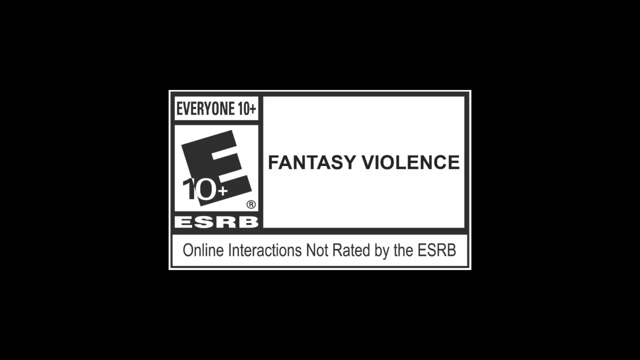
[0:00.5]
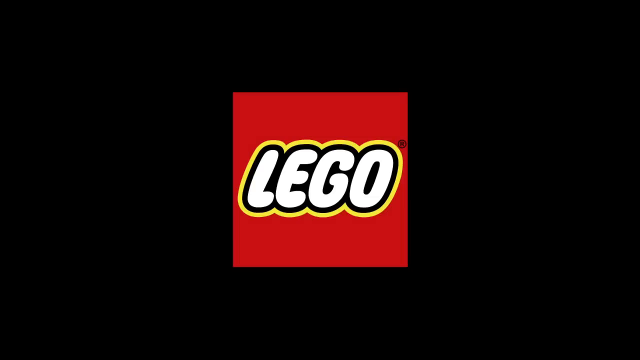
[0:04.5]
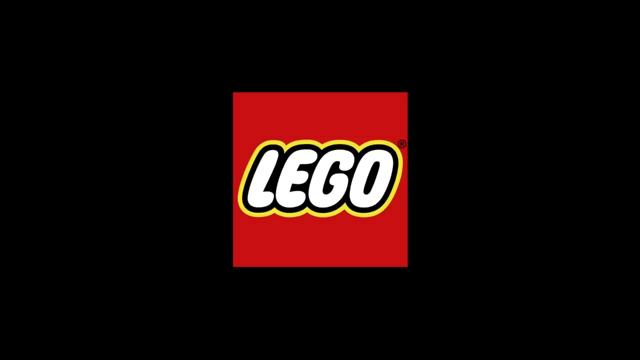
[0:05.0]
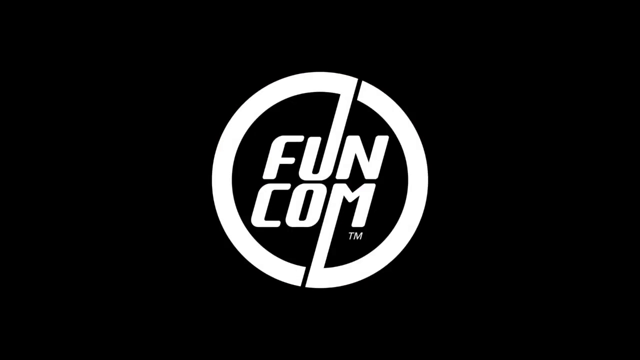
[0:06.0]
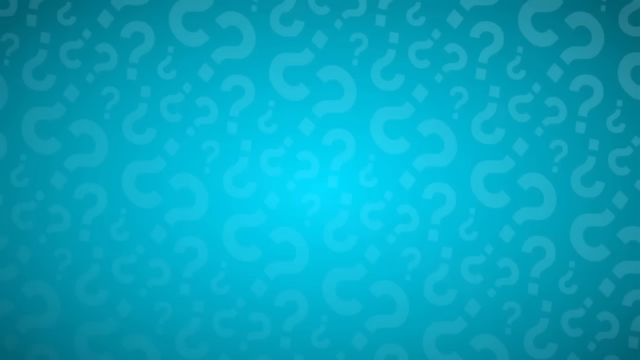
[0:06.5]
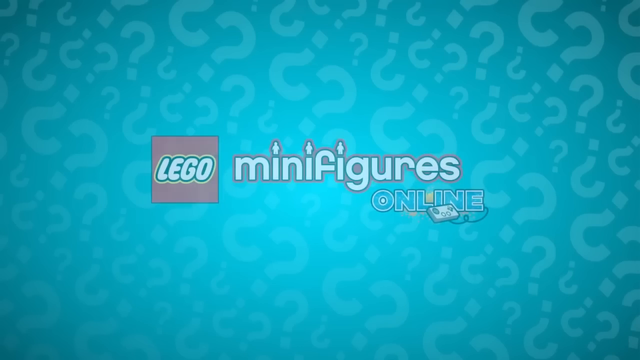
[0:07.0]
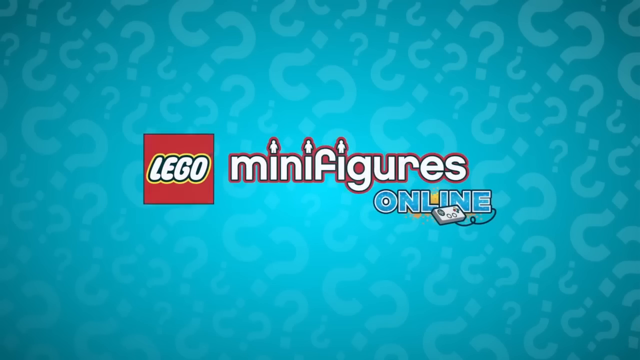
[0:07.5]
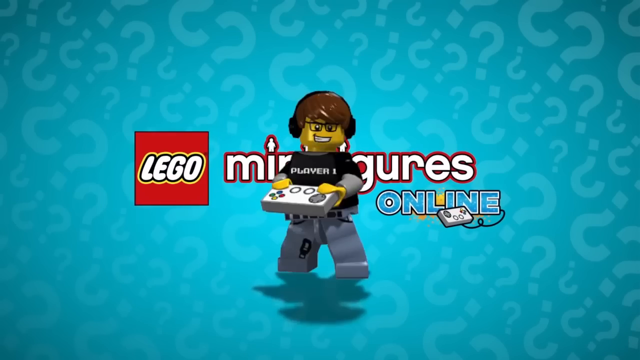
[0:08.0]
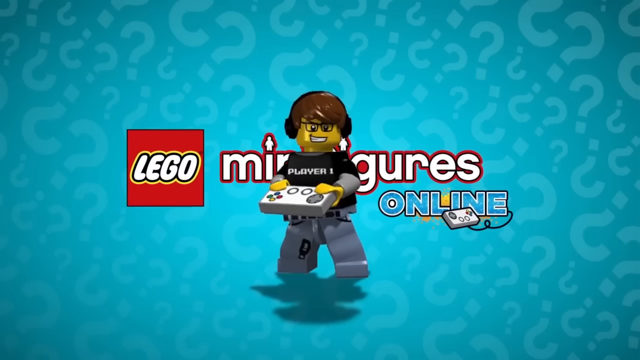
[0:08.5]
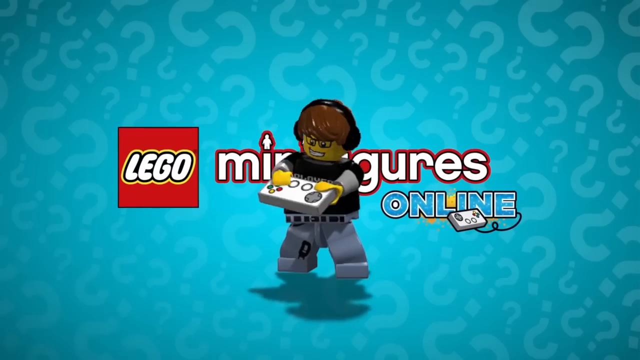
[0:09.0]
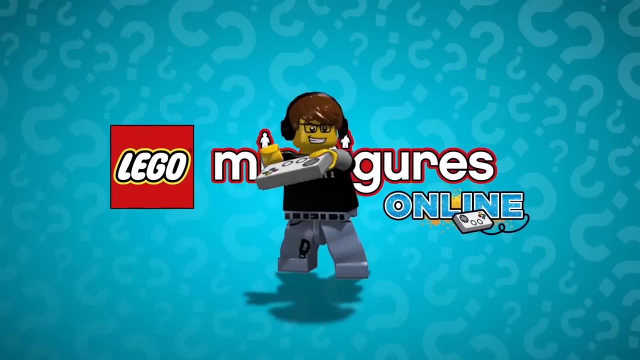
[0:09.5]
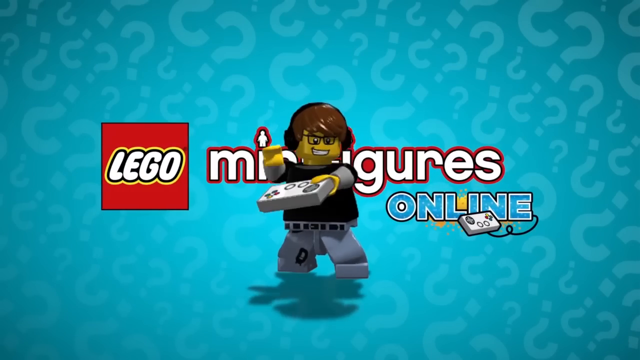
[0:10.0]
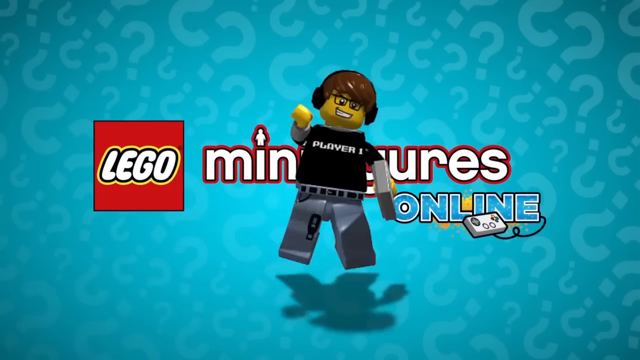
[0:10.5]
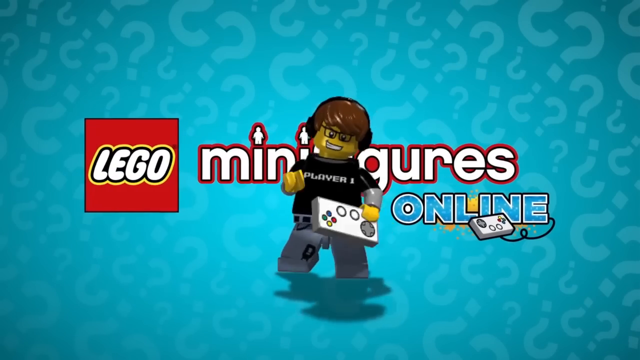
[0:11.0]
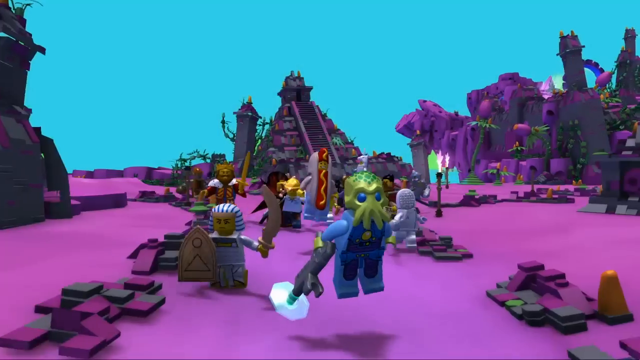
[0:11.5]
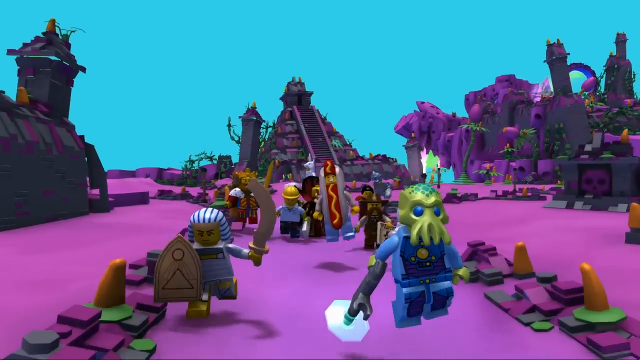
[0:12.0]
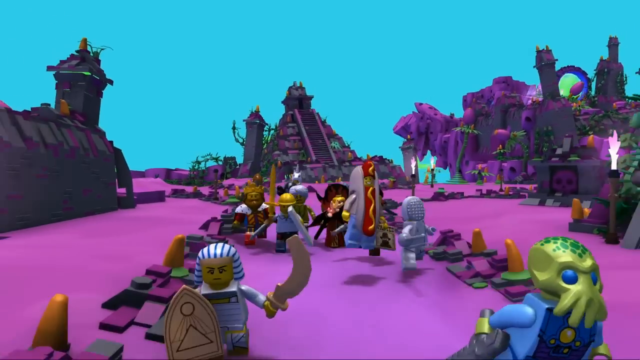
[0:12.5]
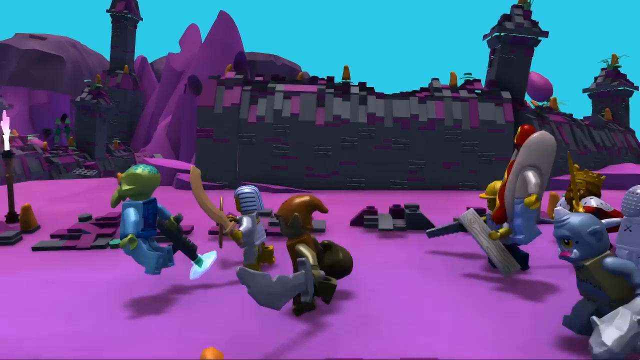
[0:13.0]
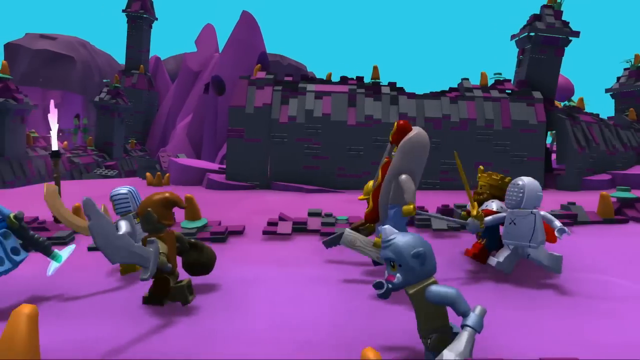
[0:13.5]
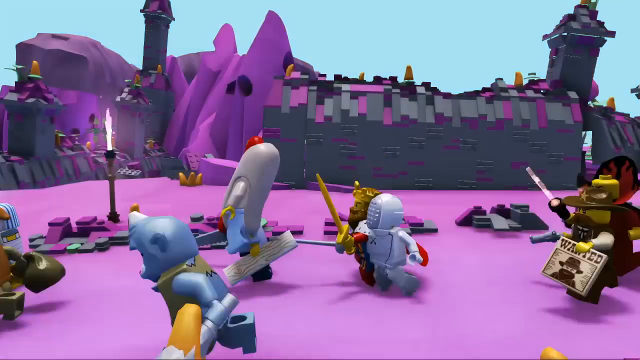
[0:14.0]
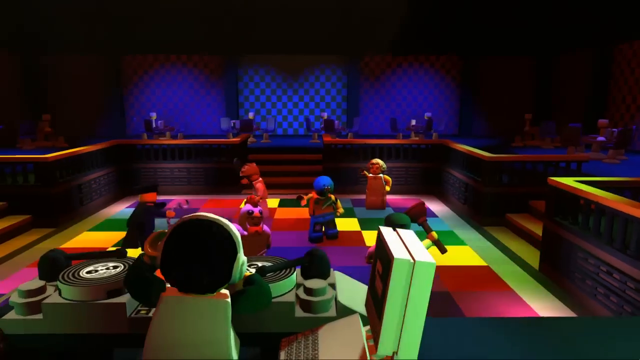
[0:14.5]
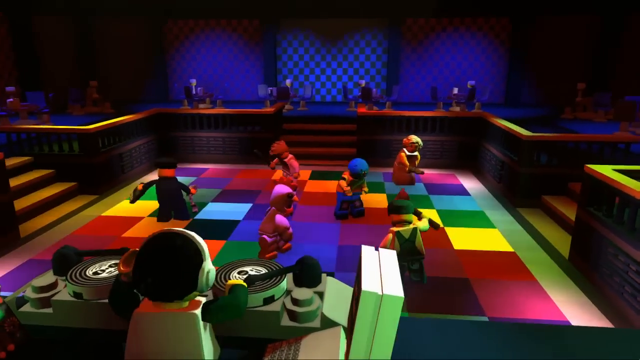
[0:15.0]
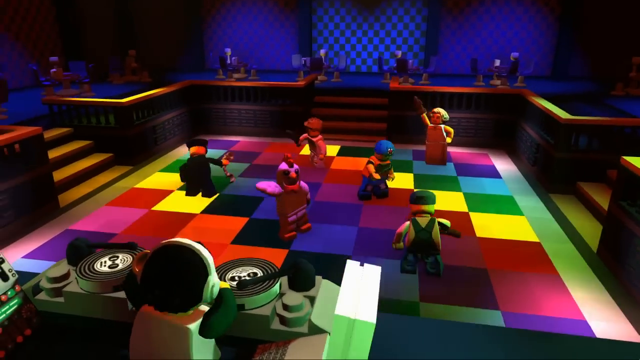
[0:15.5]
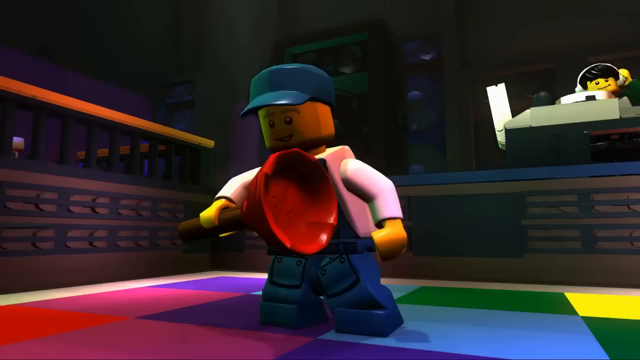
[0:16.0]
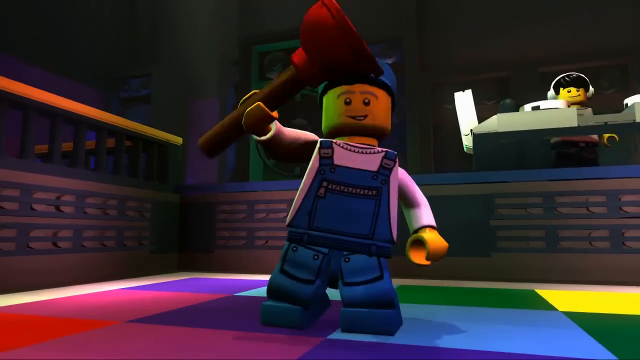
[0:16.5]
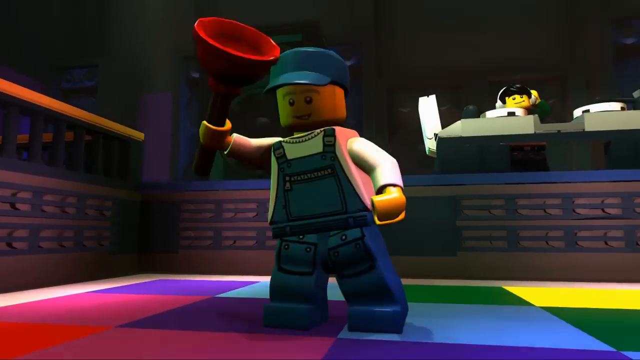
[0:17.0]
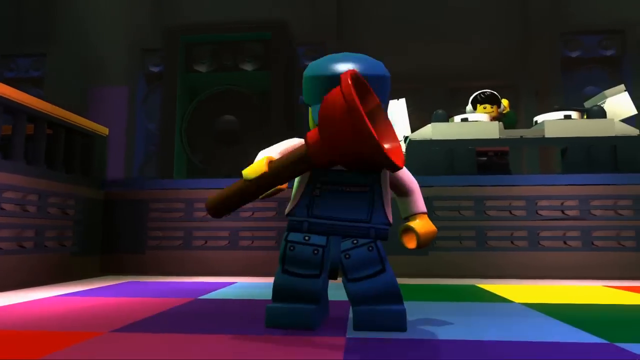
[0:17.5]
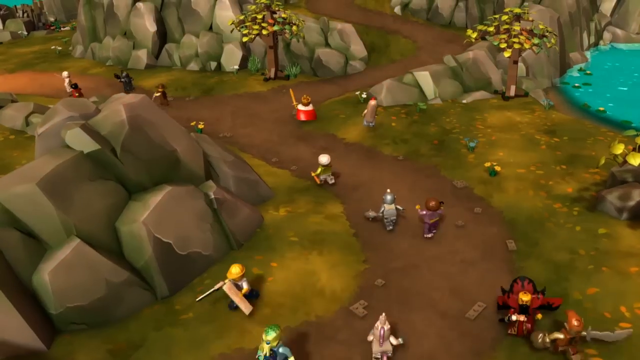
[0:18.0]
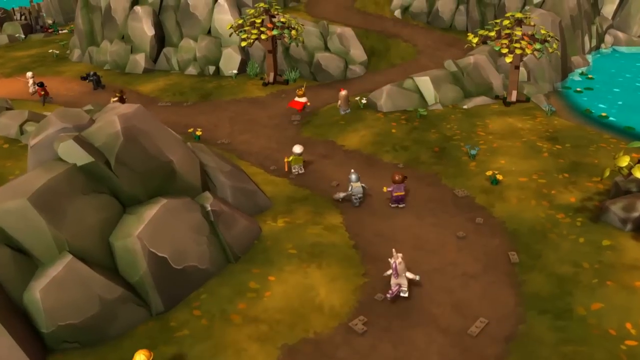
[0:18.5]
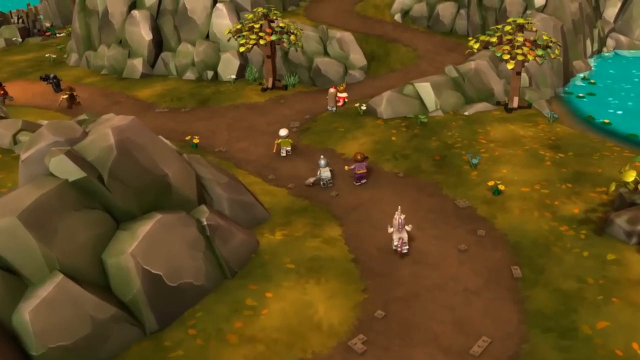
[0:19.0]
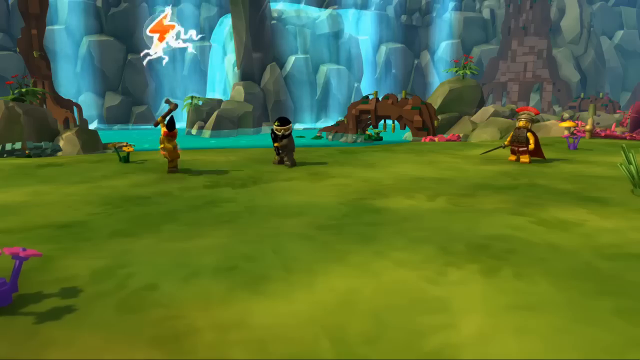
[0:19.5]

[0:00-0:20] The video opens on a black and white screen: the background is black, and a white rectangle in the center holds black text that says "everyone 10+ / E 10+ / ESRB / Fantasy Violence / Online interactions not rated by the ERSB." It switches to a black screen with a red square in the middle that says "Lego," then to a black screen with white text that says "fun com." Next comes a turquoise background with many question marks and the words "Lego minifigures online." A Lego man drops down; he wears a black t-shirt with gray sleeves, gray pants, black headphones and black glasses, has brown hair, and holds a gaming console, tapping it with his left hand. A screen follows with magenta ground and a blue sky with many buildings, where many different Lego characters are running: one is some sort of octopus, one an ancient Egyptian character, one a hot dog, one a king, and others are hard to make out. They are all running with swords. Different characters then appear on a rainbow dance floor, including a plumber. More characters, with only their tops visible, run through a field.